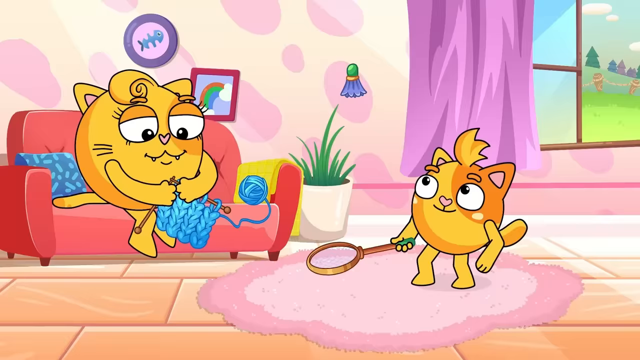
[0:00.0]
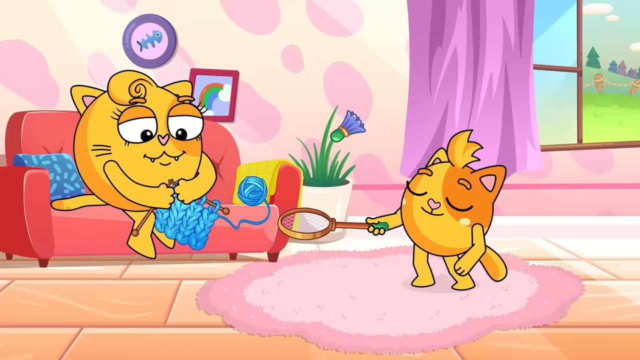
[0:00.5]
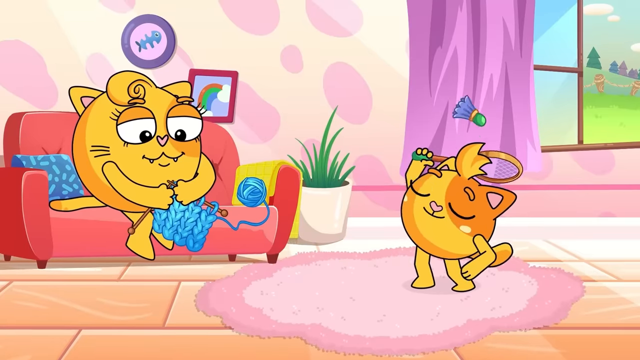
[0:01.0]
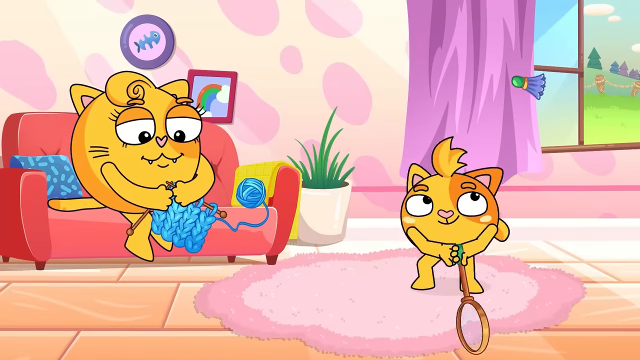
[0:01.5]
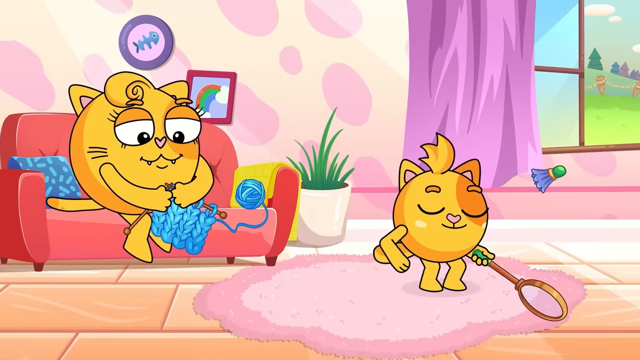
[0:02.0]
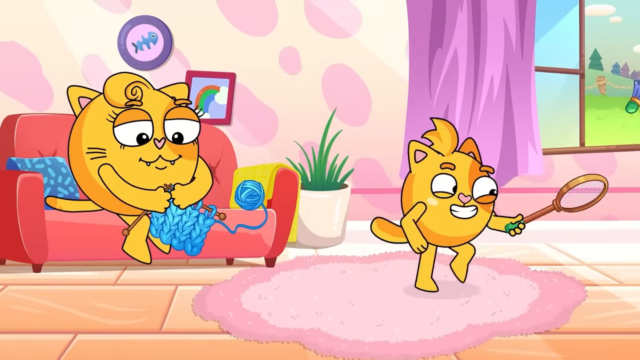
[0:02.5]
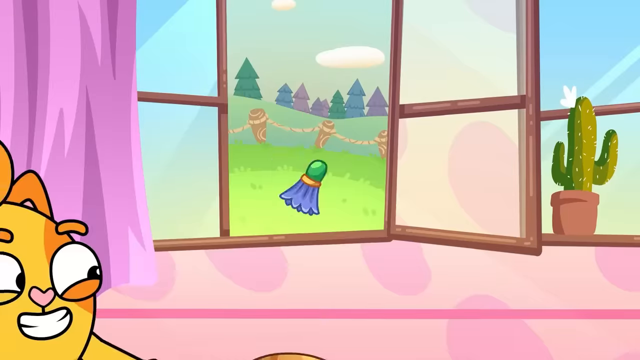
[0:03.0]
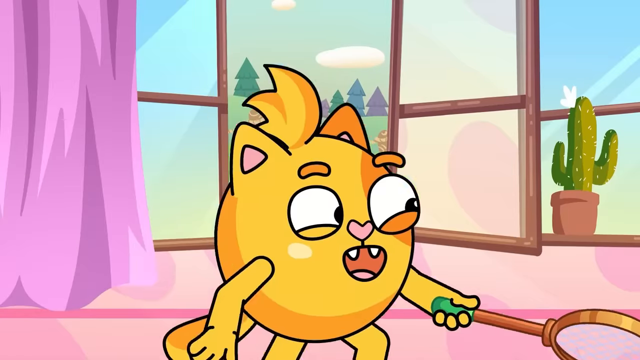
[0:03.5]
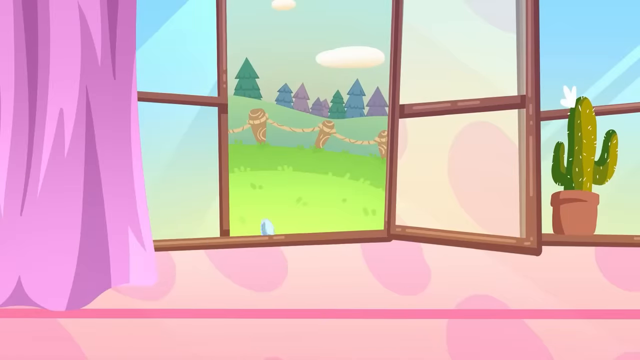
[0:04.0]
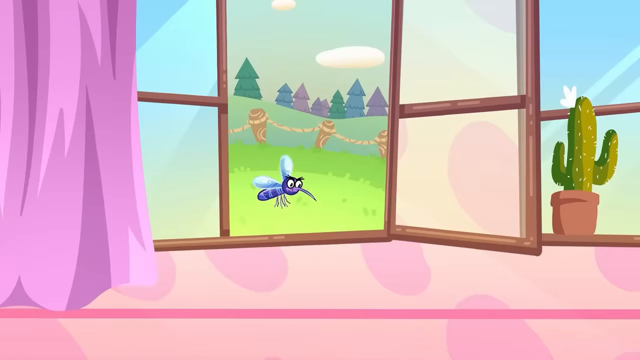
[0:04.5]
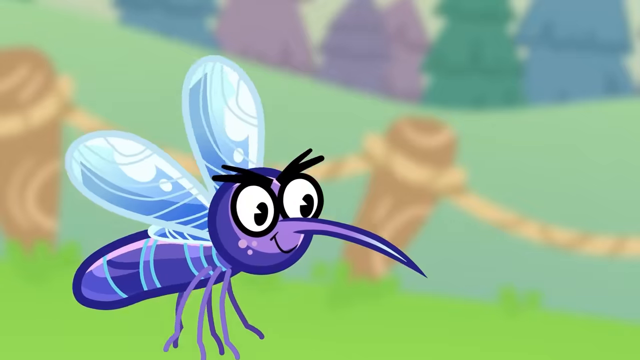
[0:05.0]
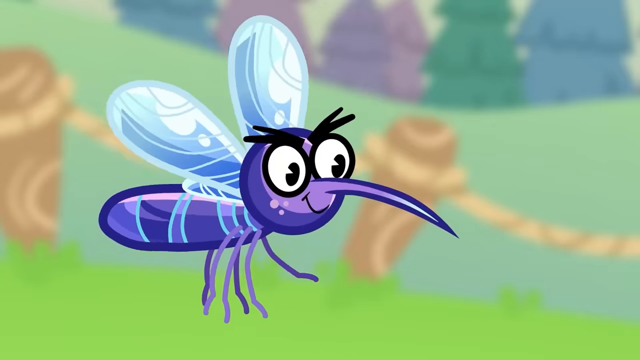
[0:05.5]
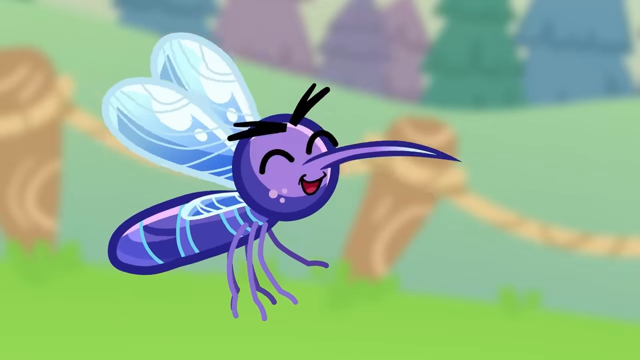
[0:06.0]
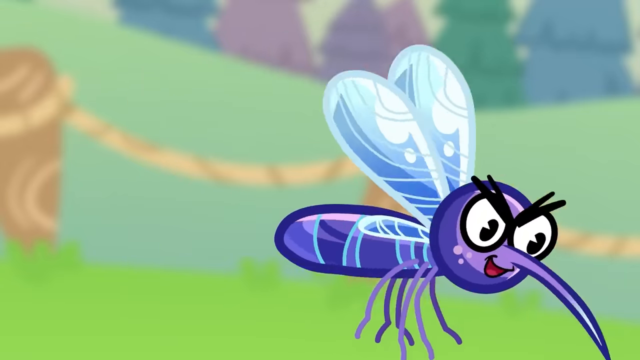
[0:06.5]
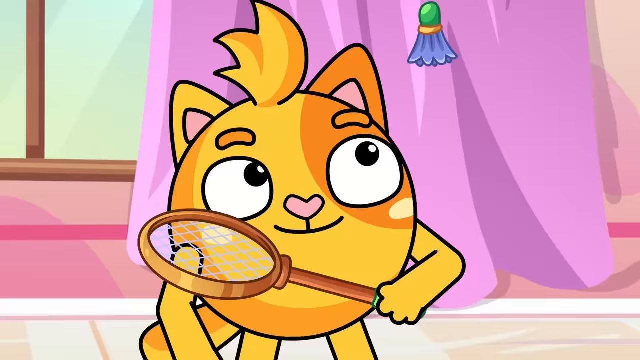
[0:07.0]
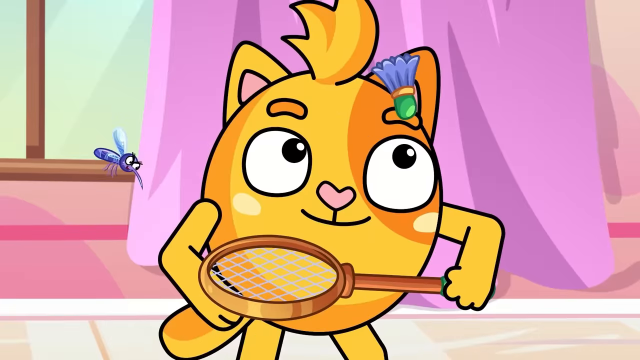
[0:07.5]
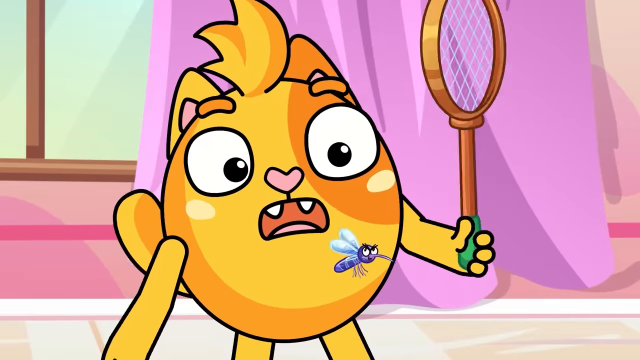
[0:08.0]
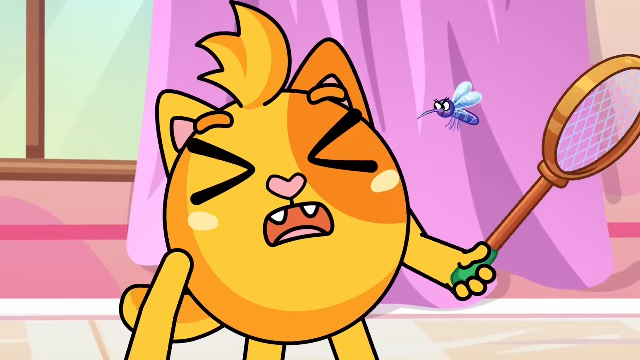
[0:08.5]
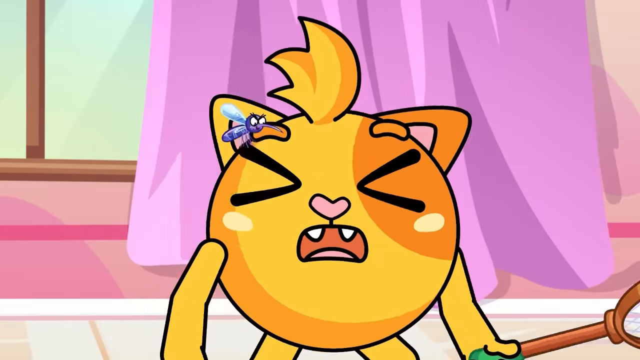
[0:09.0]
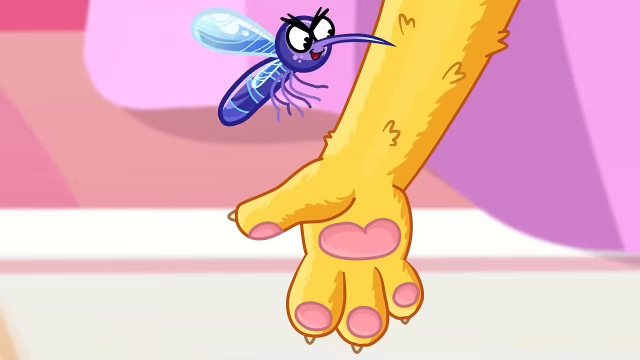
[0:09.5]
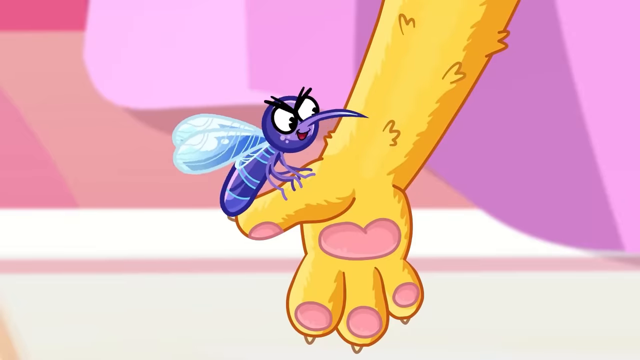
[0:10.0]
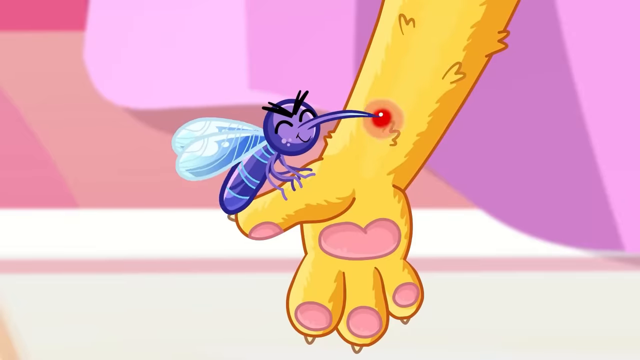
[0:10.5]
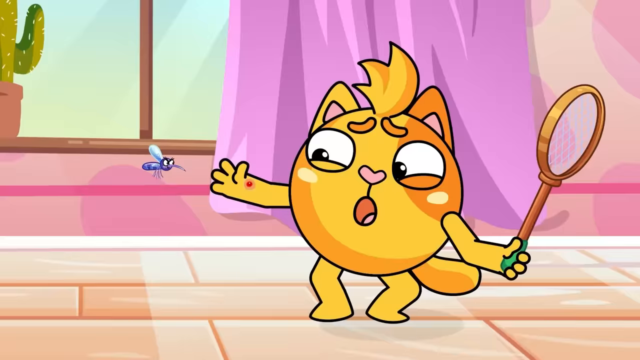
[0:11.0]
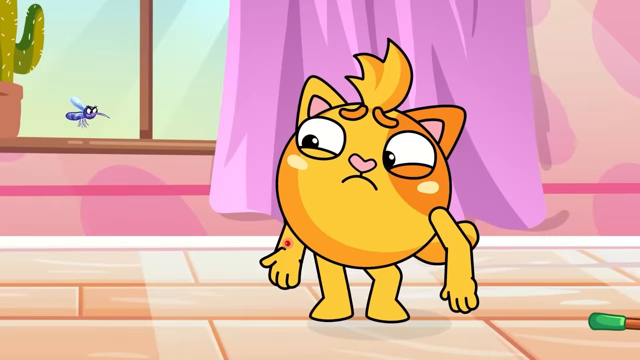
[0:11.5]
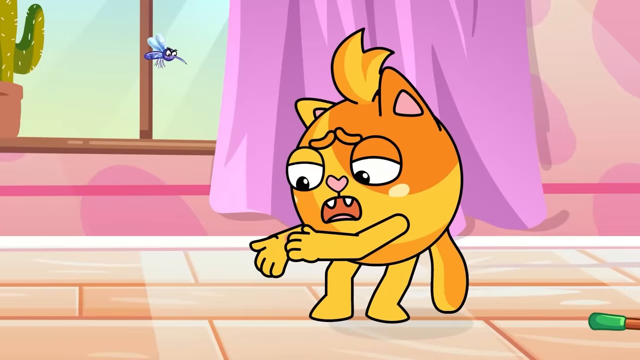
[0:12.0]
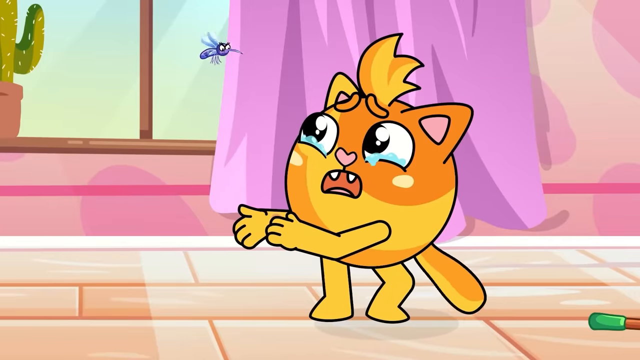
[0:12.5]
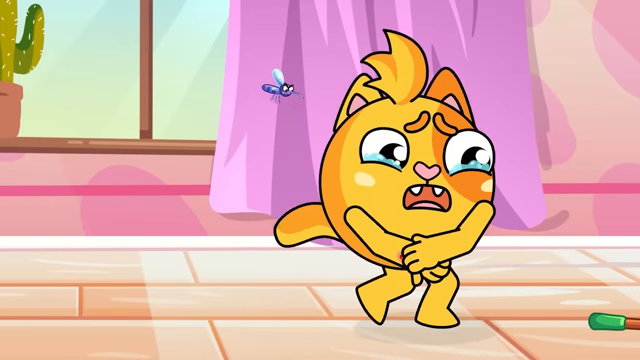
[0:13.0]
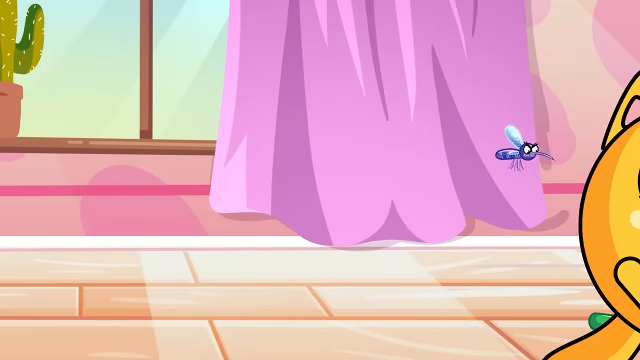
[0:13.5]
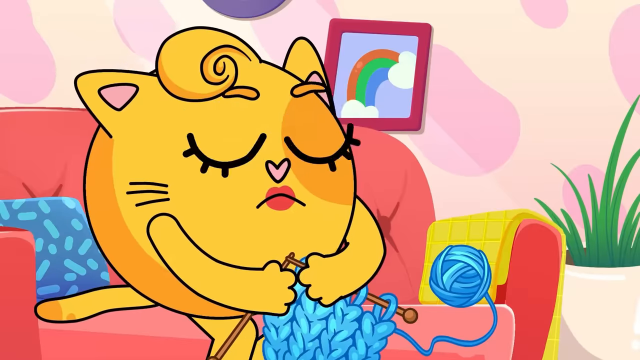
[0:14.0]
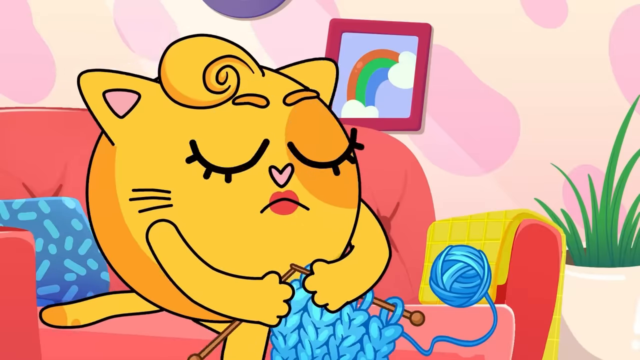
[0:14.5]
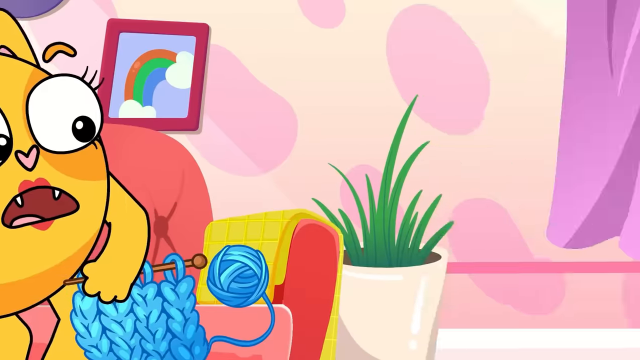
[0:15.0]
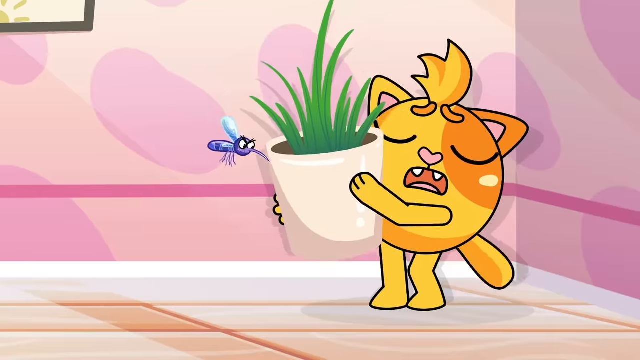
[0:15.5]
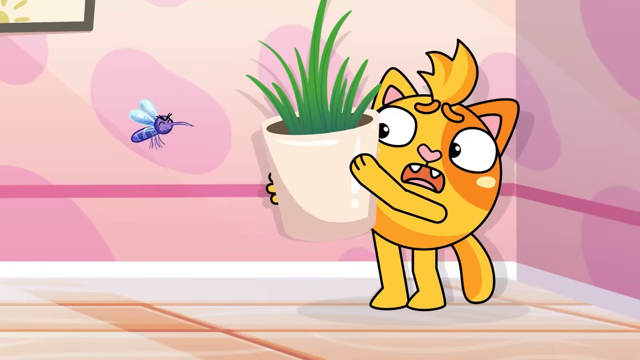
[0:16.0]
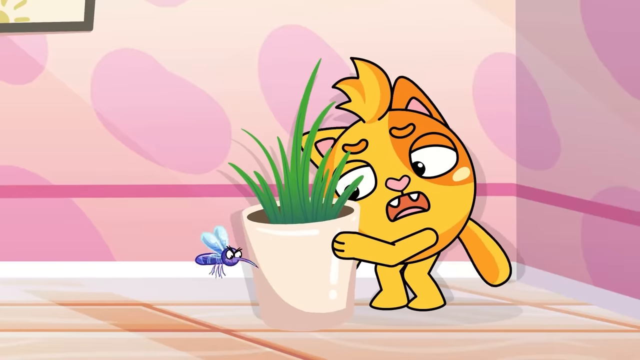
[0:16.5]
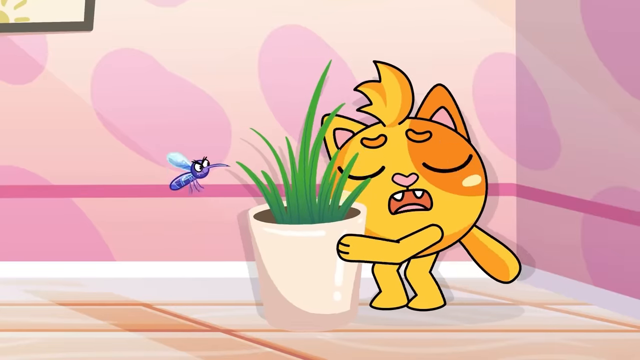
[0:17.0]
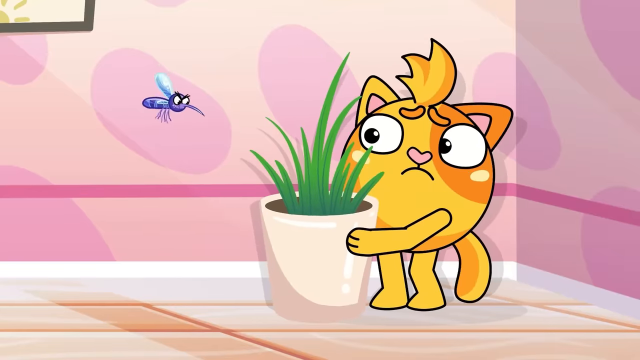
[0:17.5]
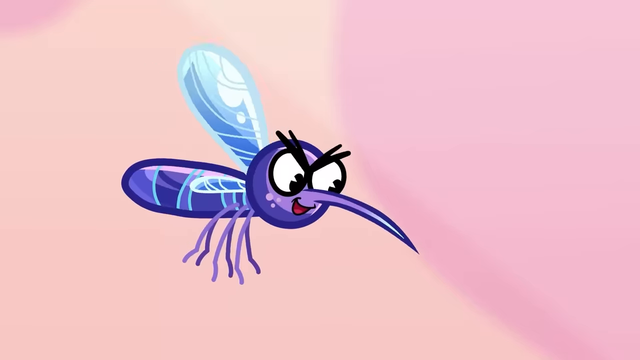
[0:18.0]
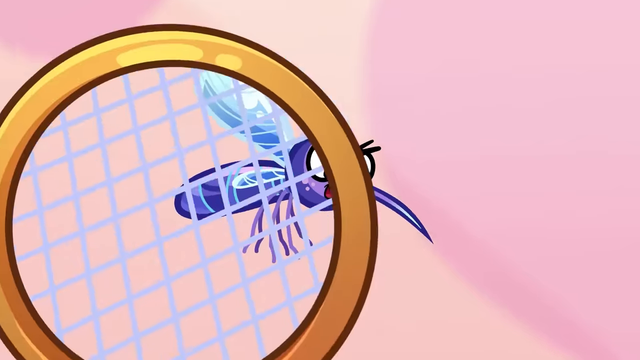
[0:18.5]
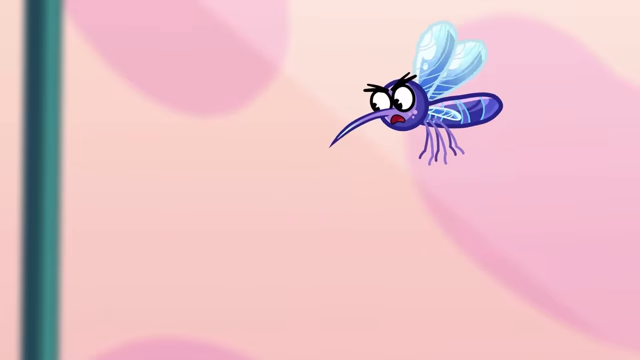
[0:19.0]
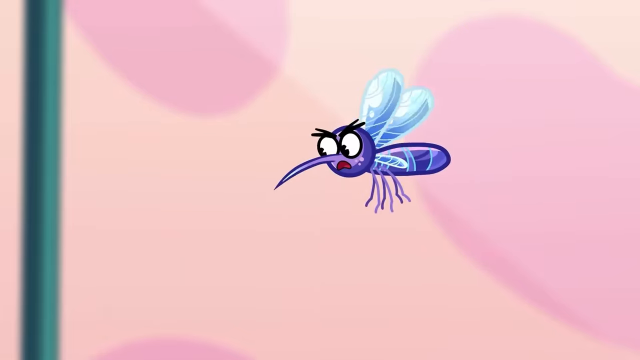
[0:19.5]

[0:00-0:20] A cartoon character is on the bottom right side: an orange cat made of a circle, with rectangles for arms and legs, an orange tail and a tuft of orange hair. It is smiling, looking to the left and holding out what appears to be a tennis racket. An open window at the top right shows green fields, fence posts, trees, a blue sky and white clouds. The wall has pink dots. There is a clock that appears to be a bony fish, and a painting of what appears to be a rainbow, hung kind of crooked. A mom cat, a large white circle with two big eyes, sits on a pink couch, her eyes looking down at what appears to be knitting rope as she knits what appears to be a square blanket of some sort. The little cat hits what appears to be a badminton shuttlecock, runs over to the right and keeps hitting it. A purple mosquito appears in the window, and the view zooms in on its face: it has a very long pointy nose, big eyes and wings. Smiling, the mosquito zooms forward, disturbs the small cat and pokes him on the arm, leaving the arm red and bumpy. The mom cat exclaims.